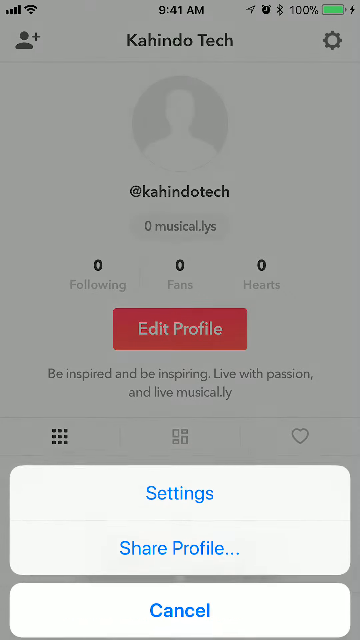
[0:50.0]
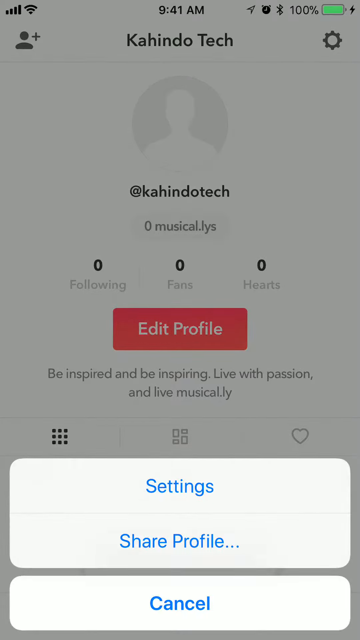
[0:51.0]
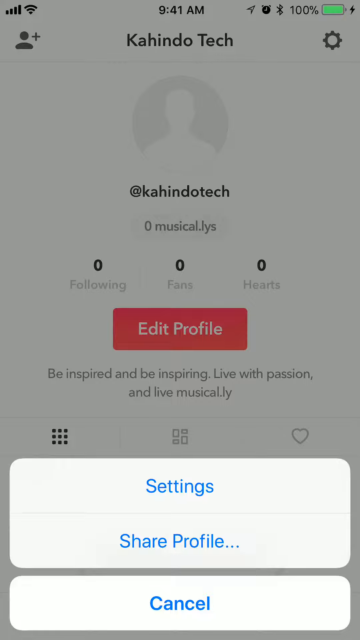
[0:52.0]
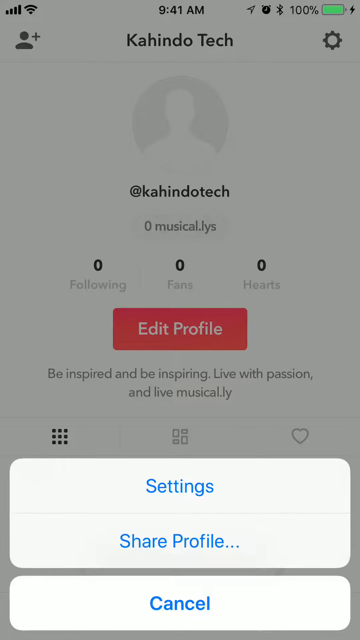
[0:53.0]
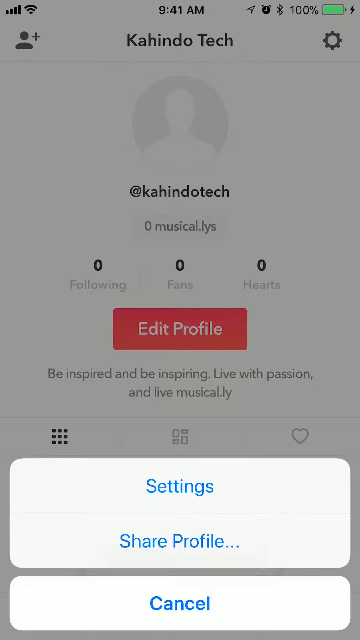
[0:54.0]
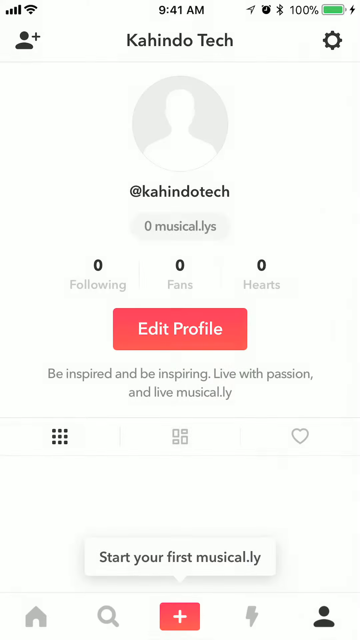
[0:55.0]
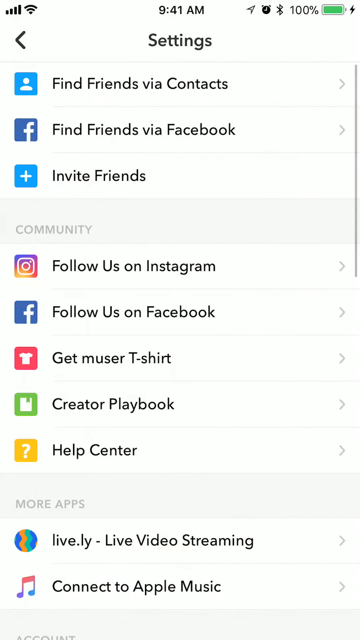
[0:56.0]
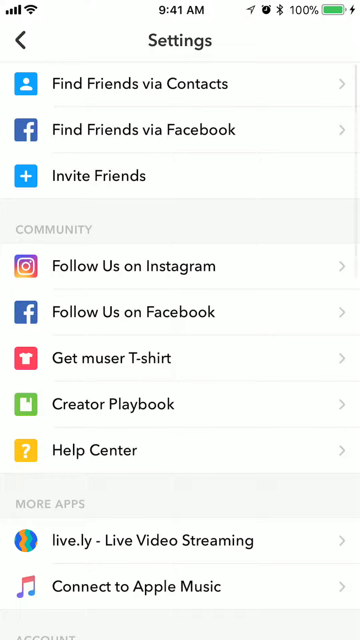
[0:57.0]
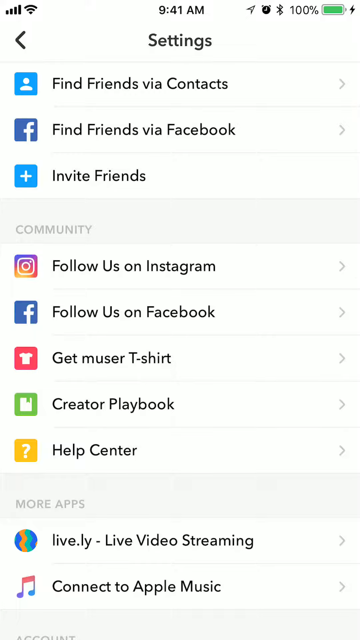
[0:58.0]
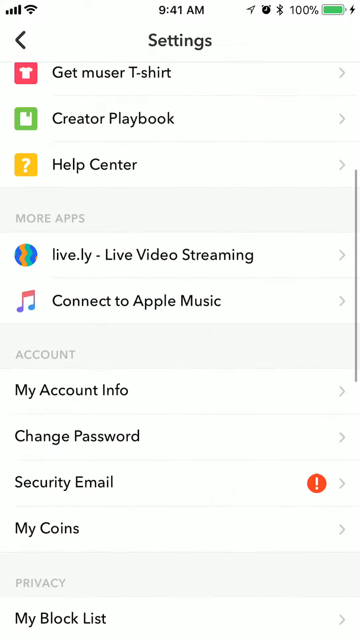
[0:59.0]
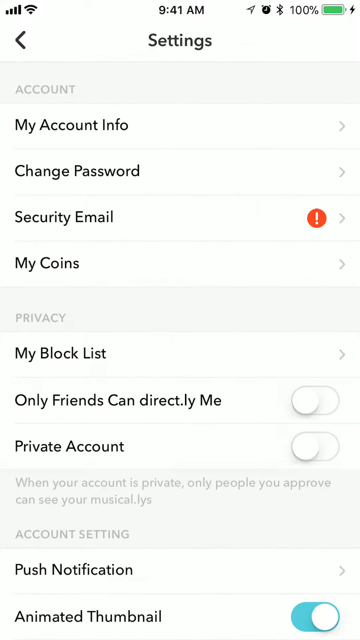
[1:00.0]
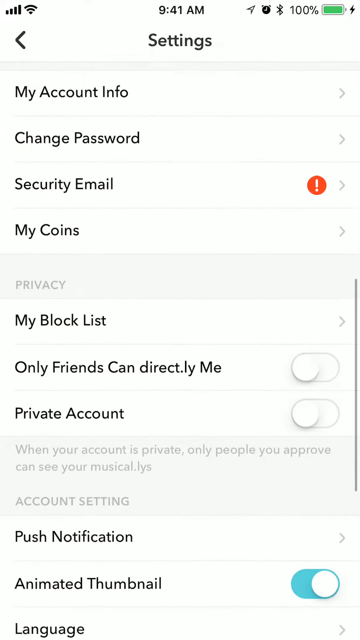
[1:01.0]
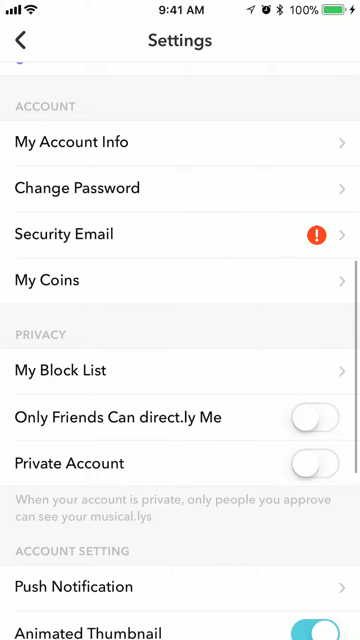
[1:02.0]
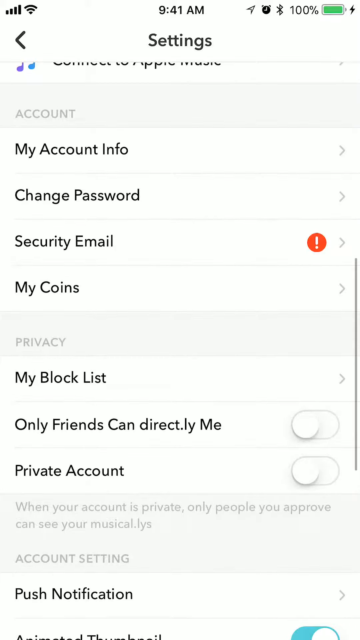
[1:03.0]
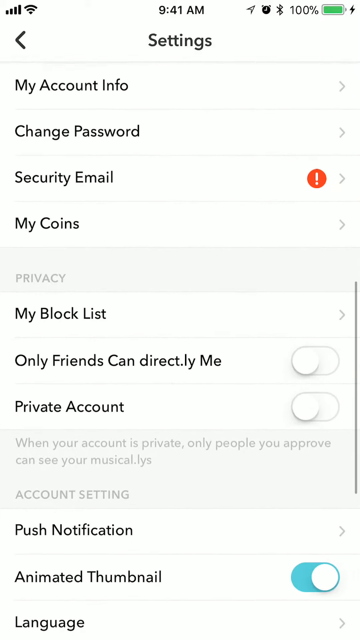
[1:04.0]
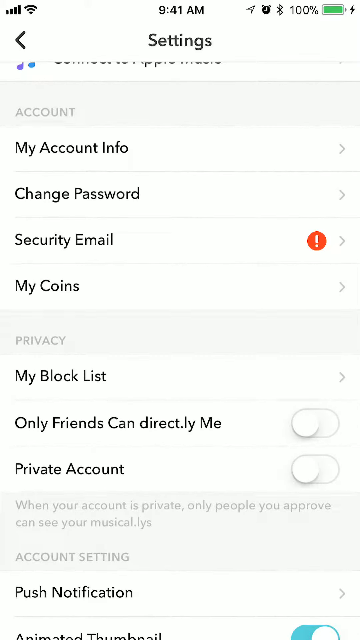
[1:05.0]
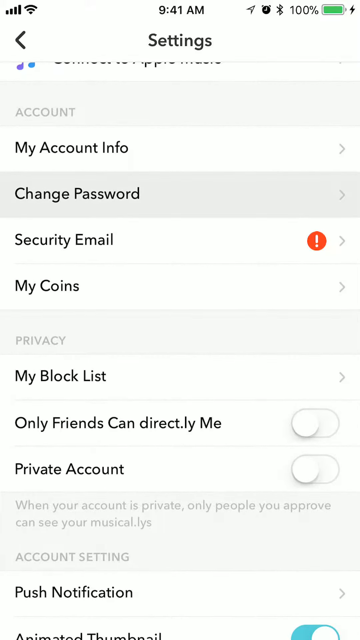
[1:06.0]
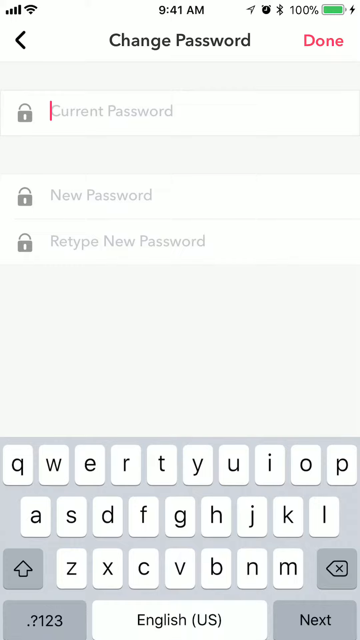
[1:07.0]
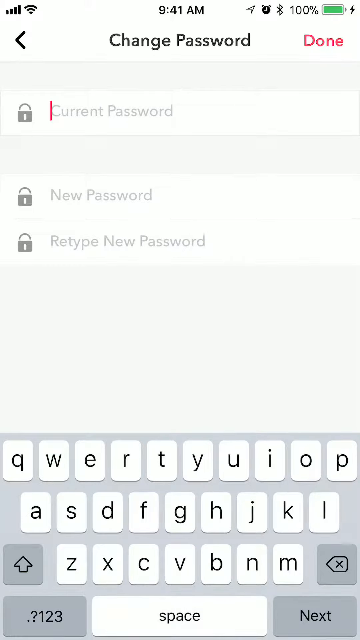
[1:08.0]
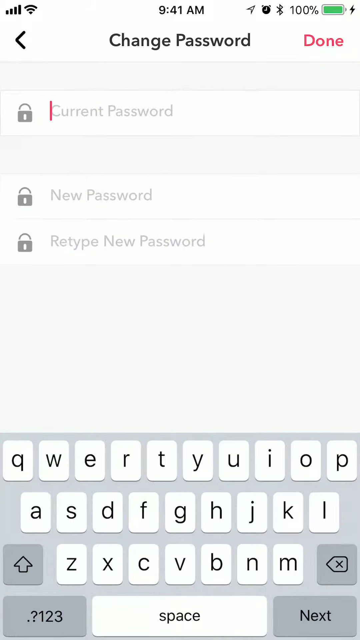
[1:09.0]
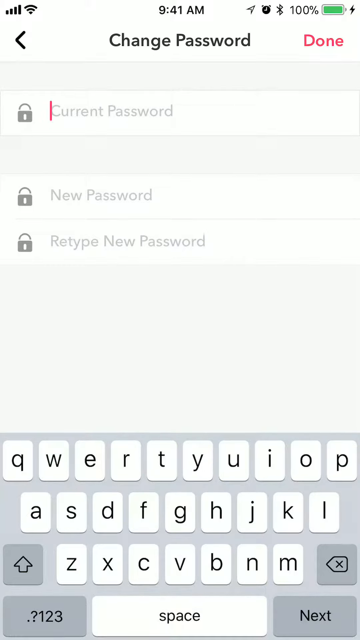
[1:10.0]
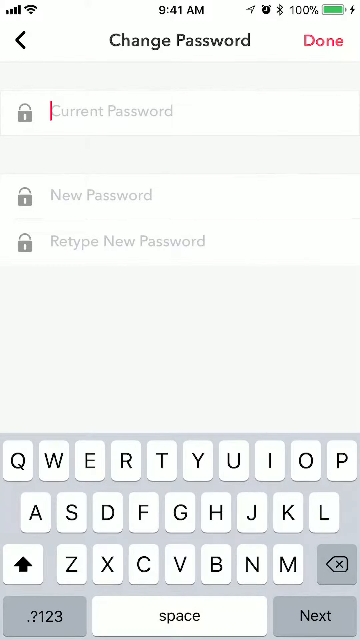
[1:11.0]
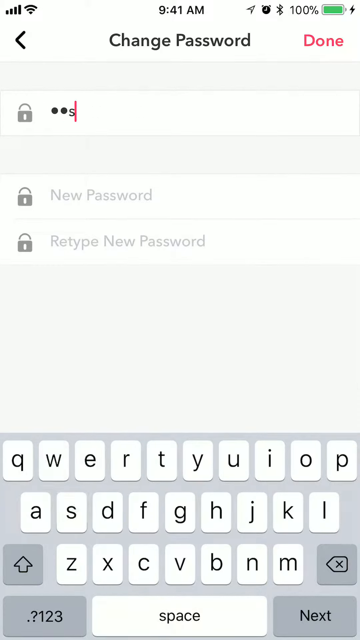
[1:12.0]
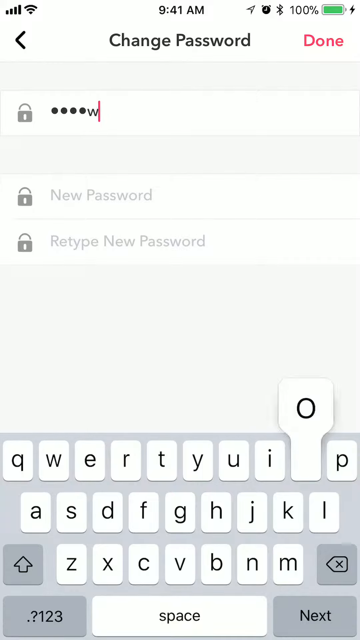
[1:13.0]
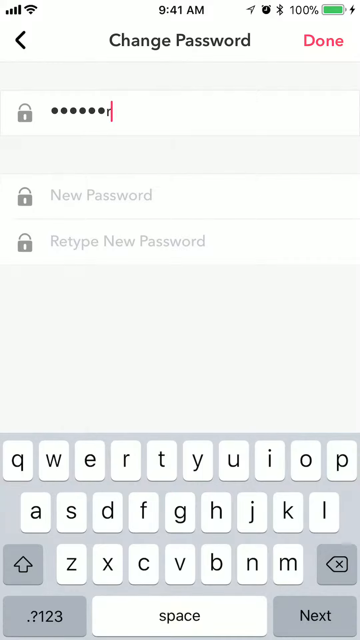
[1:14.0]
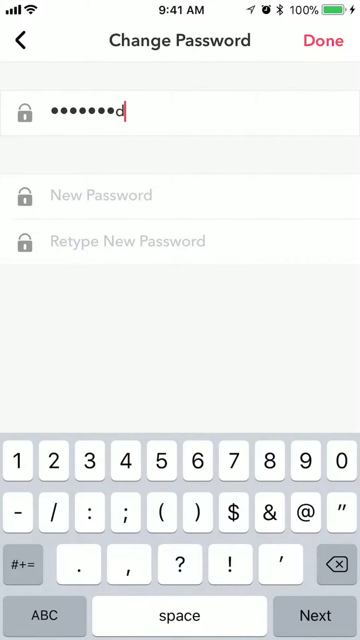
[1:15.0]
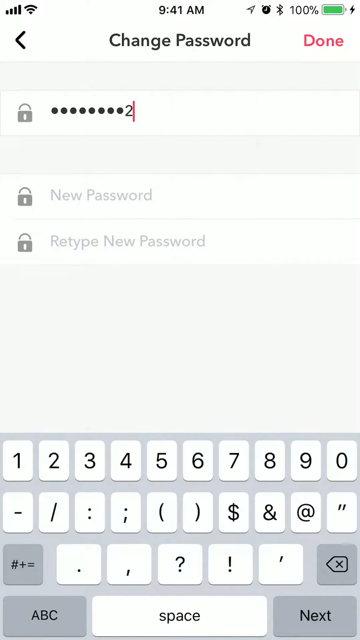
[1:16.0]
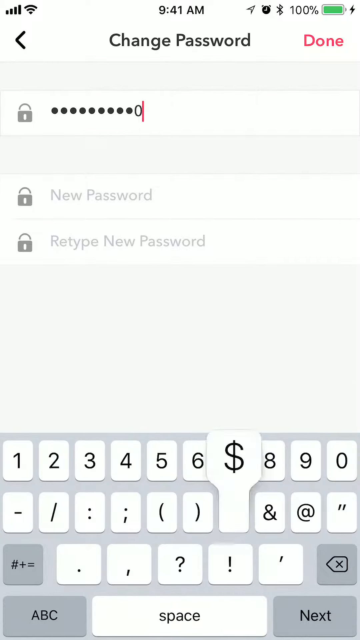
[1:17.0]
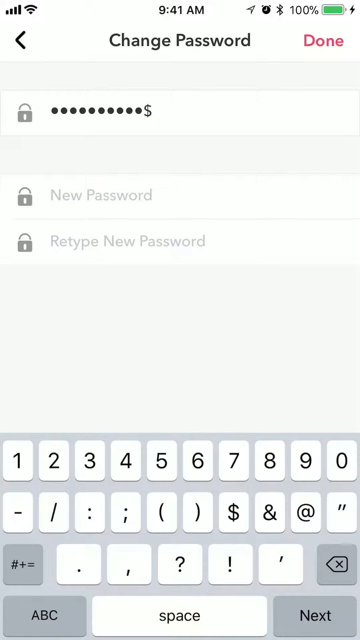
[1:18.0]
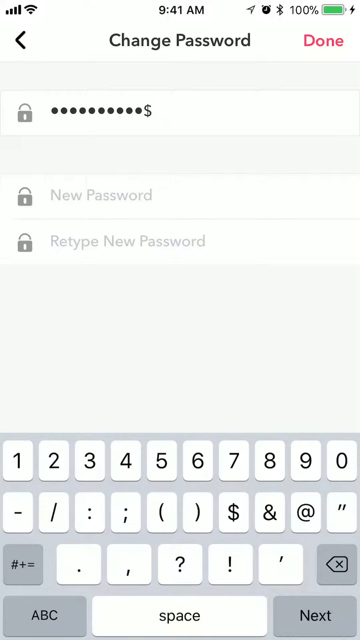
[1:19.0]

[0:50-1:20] The profile of a user named Cajindotech shows zero videos or musical.lys, zero following, zero fans and zero hearts, with a red button to edit the profile. The user presses something below that, and a menu with settings, share profile and cancel options pops up. They press settings, which lists multiple options: invite friends via contacts, find friends via Facebook, invite friends, follow us on Instagram, follow us on Facebook, create a playbook, help center, Lively live video streaming, and connect to Apple Music. They scroll the page down to my account info, change password, security email, my coins, my block list, private account, push notifications and thumbnail. They select change password and type in the current password, which looks like it is "password".